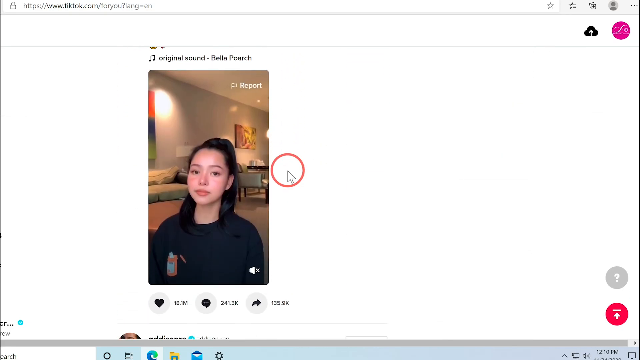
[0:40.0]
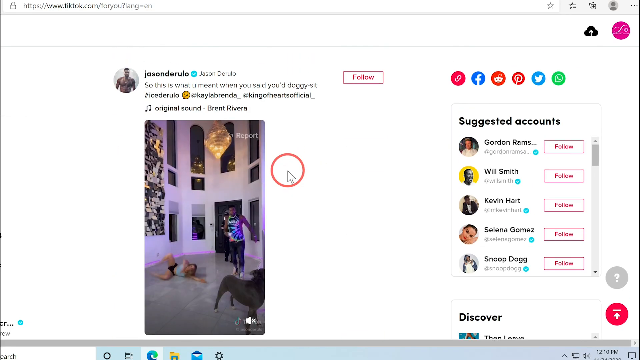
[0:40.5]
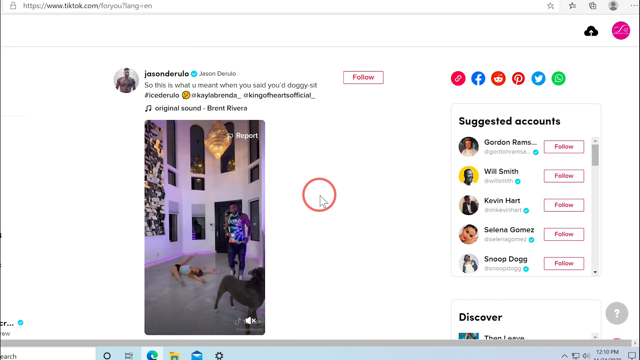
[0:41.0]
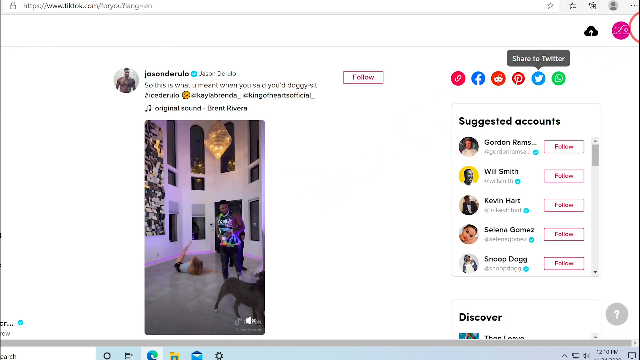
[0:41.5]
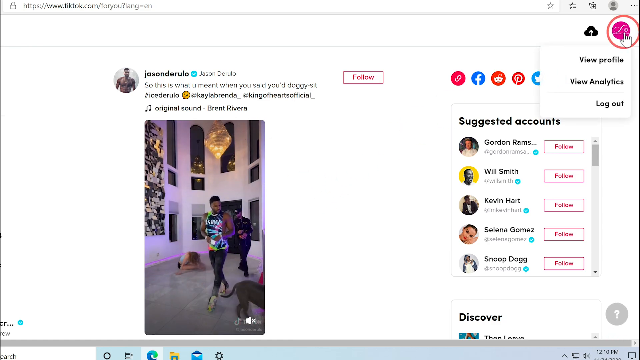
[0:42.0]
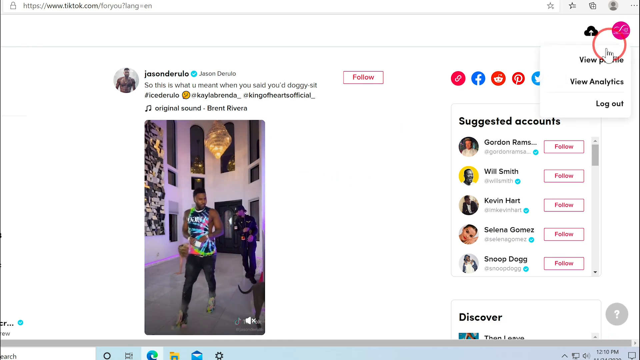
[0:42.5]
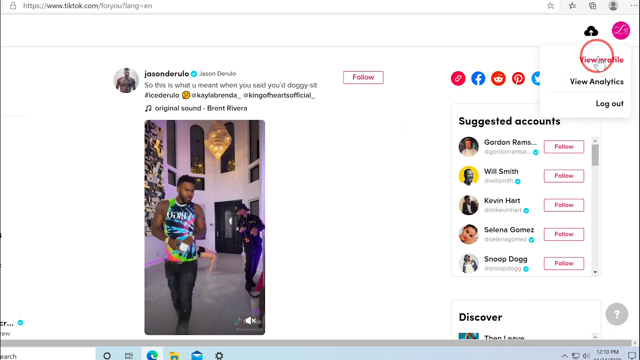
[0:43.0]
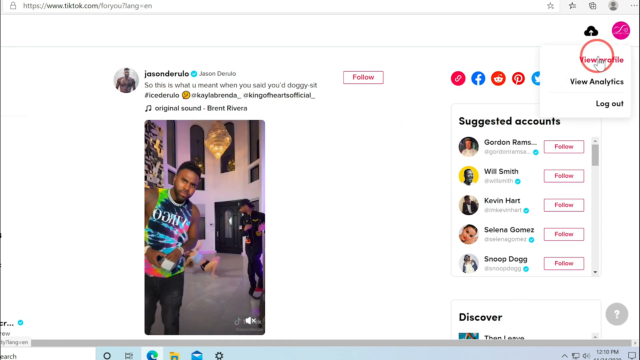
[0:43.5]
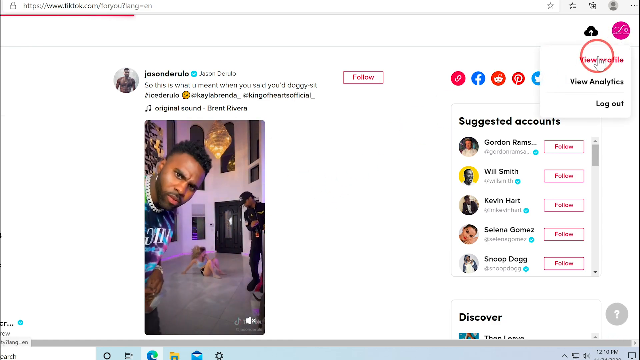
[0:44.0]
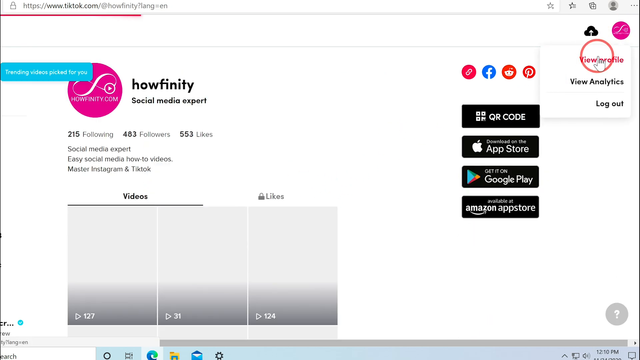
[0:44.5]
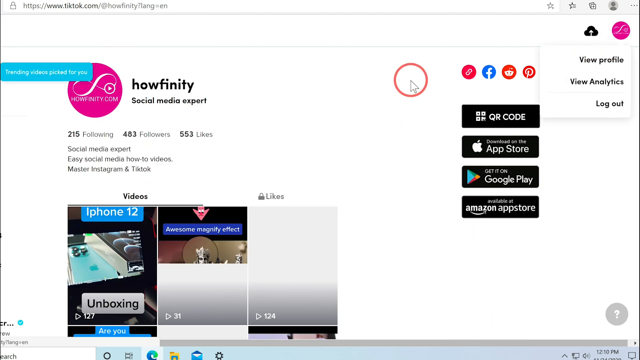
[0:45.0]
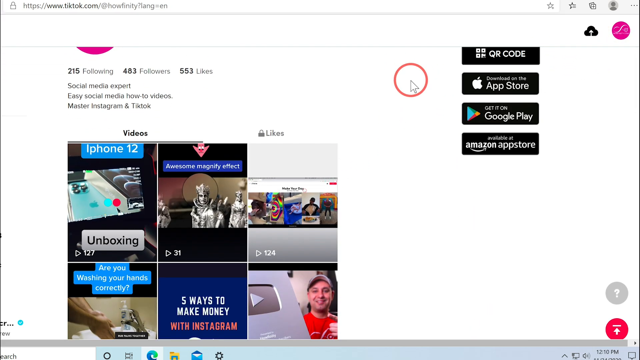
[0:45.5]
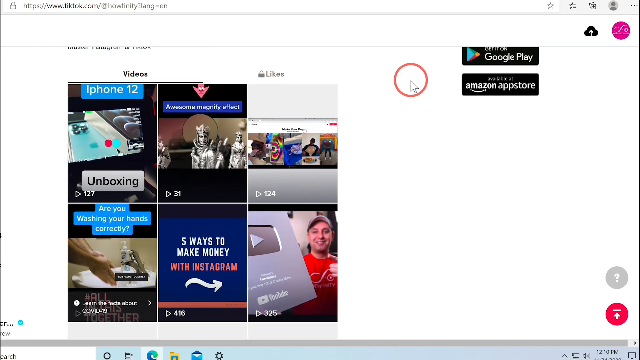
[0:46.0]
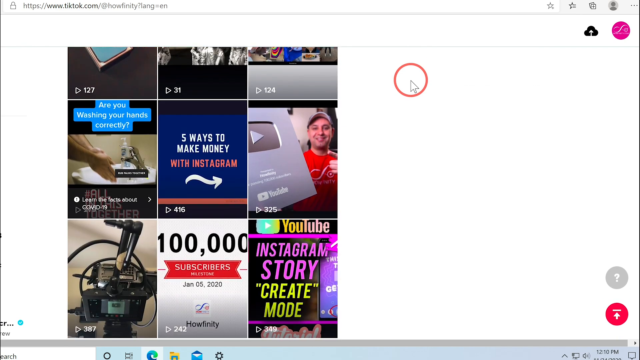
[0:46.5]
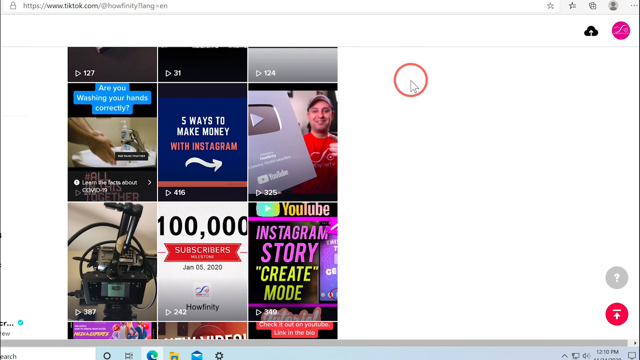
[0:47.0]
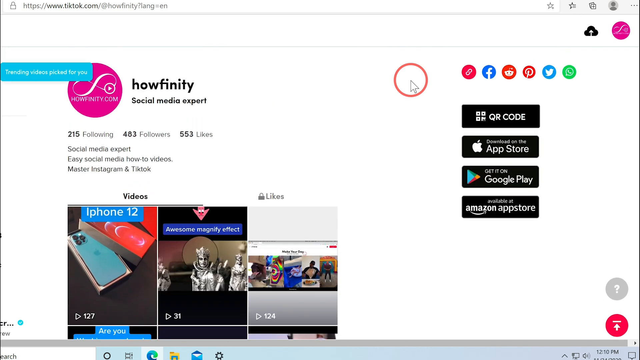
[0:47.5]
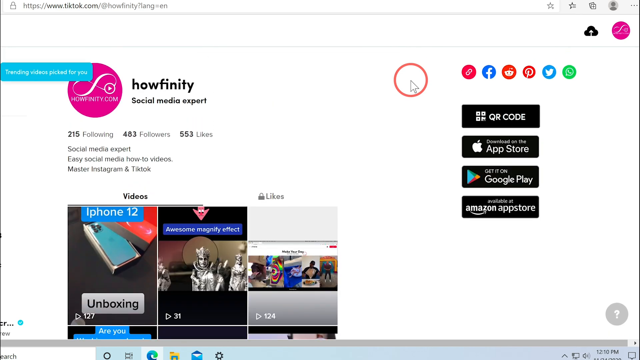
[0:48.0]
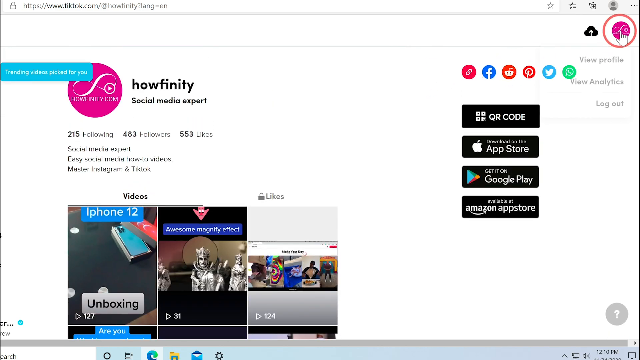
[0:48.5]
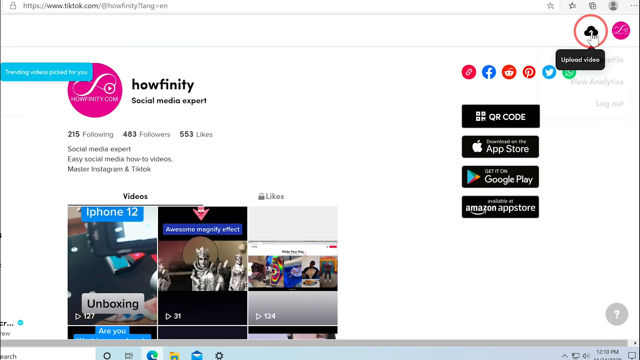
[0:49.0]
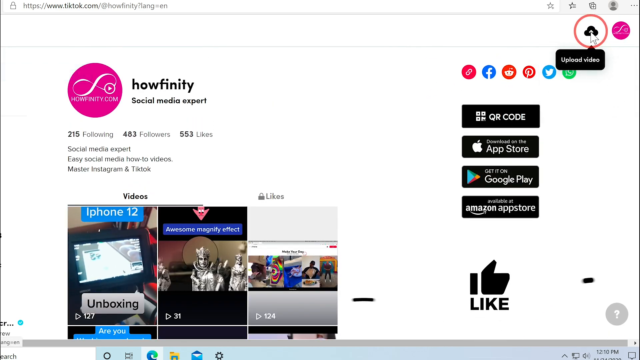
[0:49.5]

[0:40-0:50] A picture of a girl is labelled "Bella Porch". She looks like she is just standing in her living room; she has dark hair pulled back, a medium complexion and a dark shirt. The next video shows two Black guys and a white girl rolling around on the floor. Next, text says "Howlfinity", and the view moves quickly without staying on anything long, showing something like a social media expert. Then Jason Derulo appears walking with another guy, followed by a white lady rolling around on the floor. The view returns to the beginning, with the girl and the mouse icon with a red circle around it.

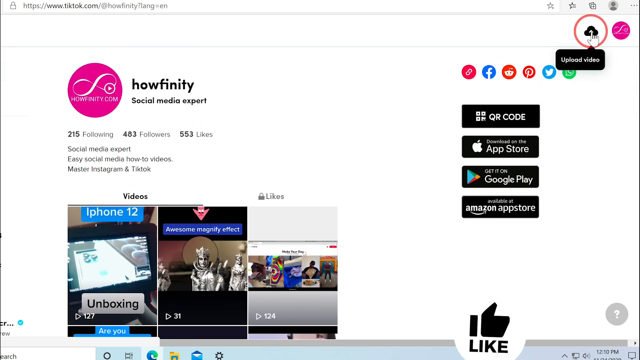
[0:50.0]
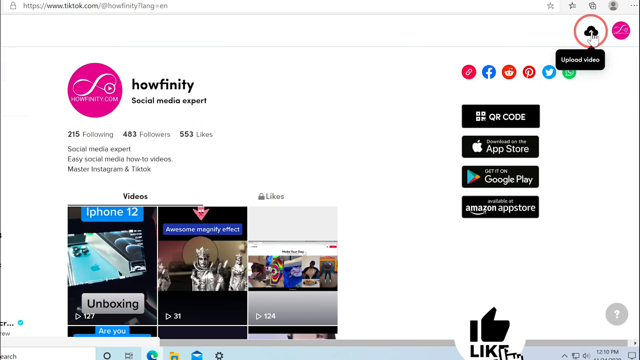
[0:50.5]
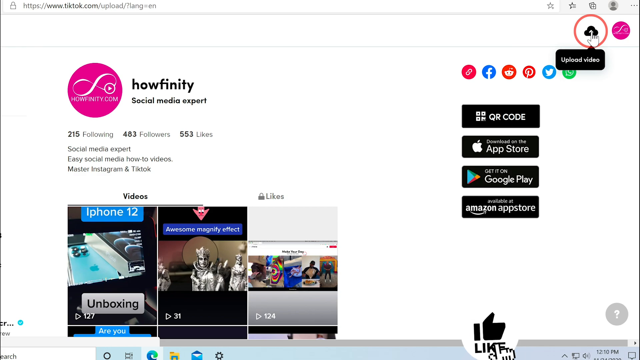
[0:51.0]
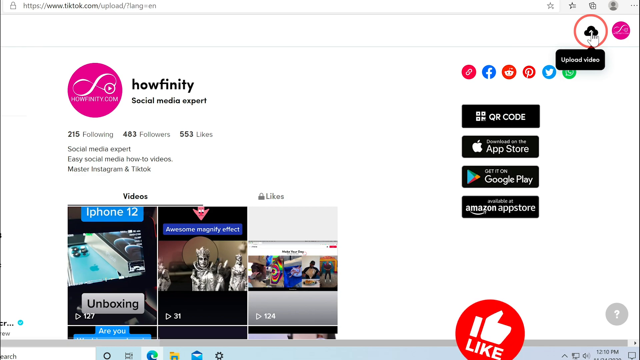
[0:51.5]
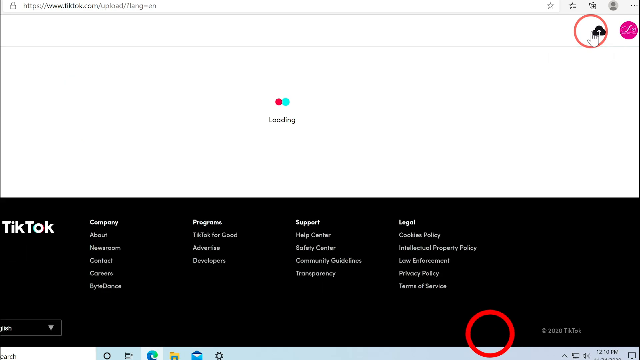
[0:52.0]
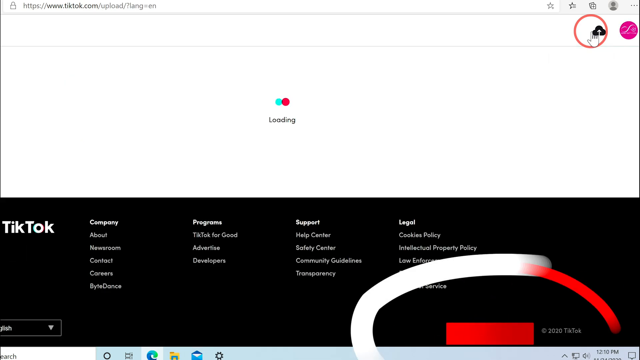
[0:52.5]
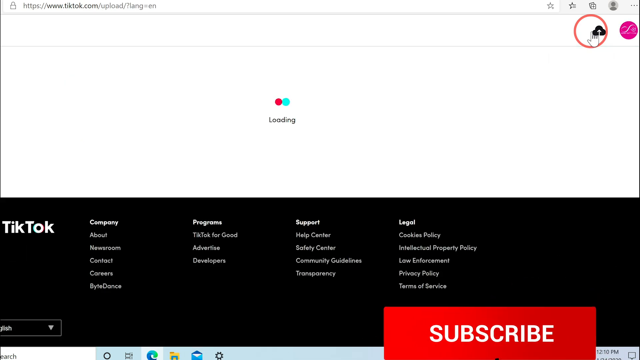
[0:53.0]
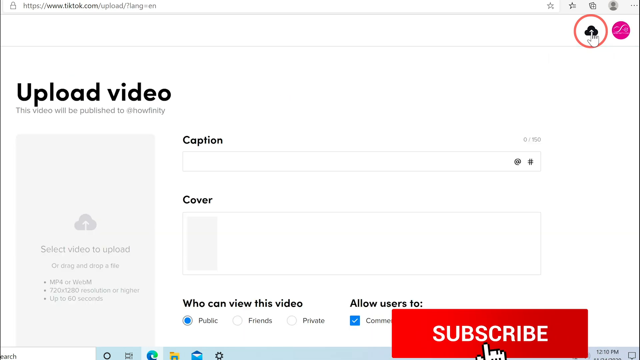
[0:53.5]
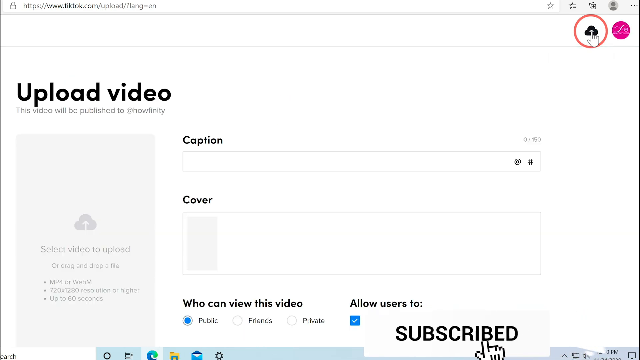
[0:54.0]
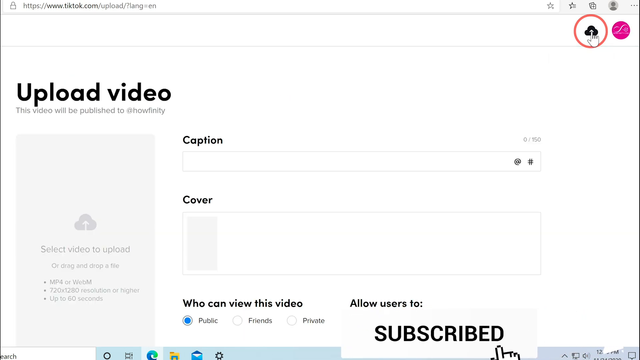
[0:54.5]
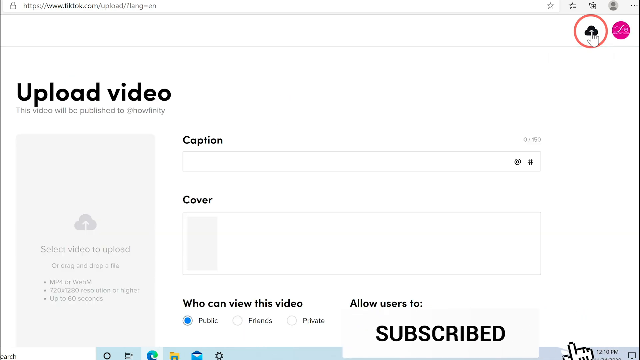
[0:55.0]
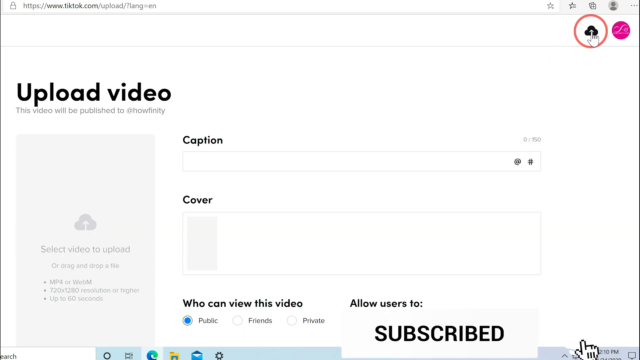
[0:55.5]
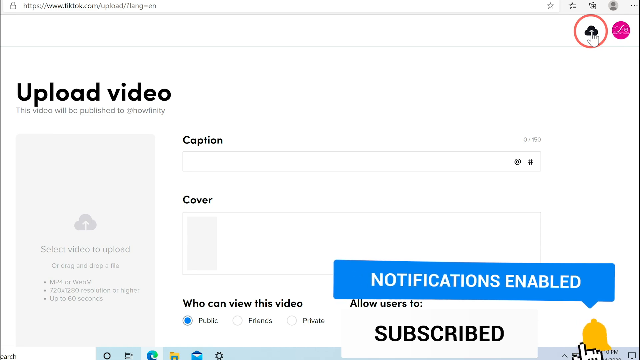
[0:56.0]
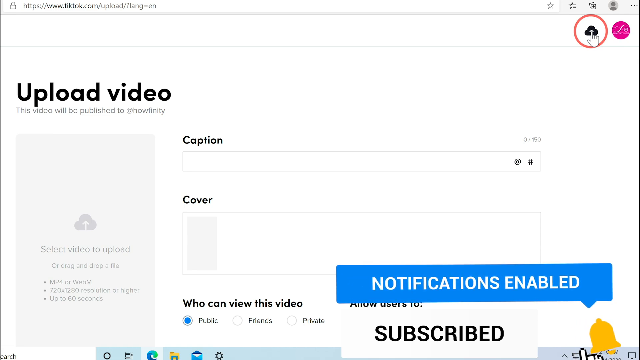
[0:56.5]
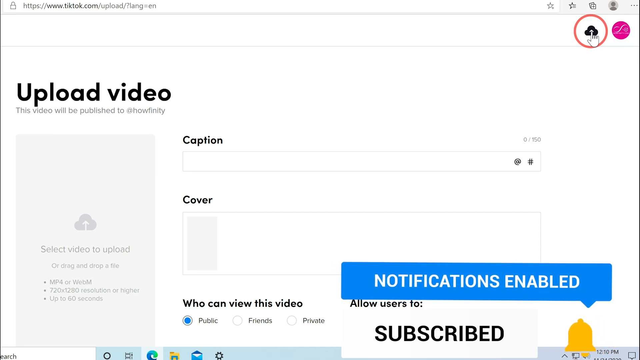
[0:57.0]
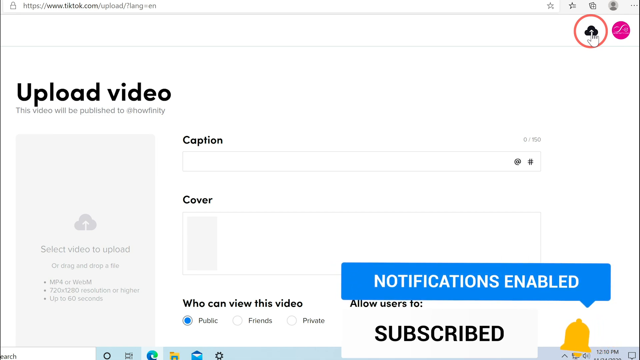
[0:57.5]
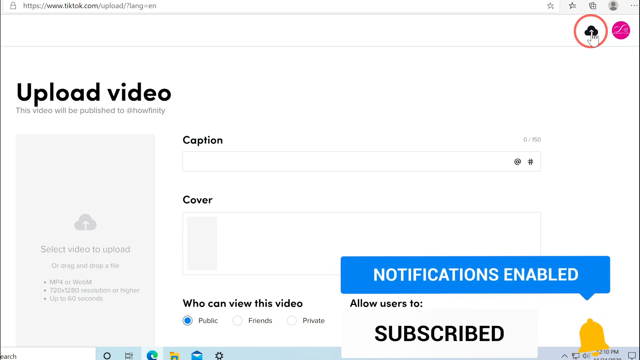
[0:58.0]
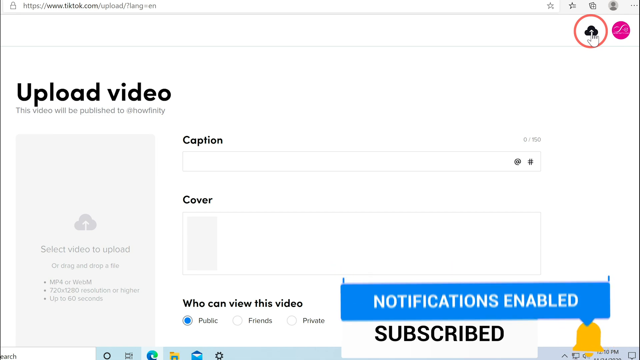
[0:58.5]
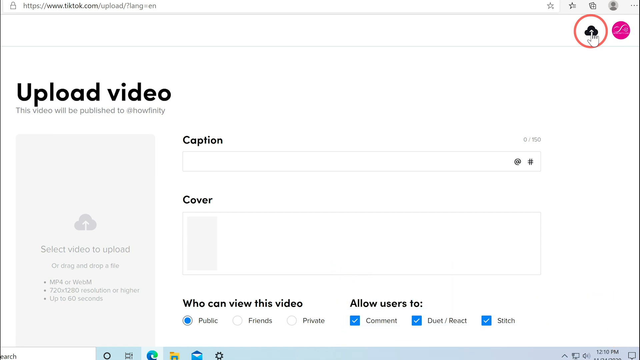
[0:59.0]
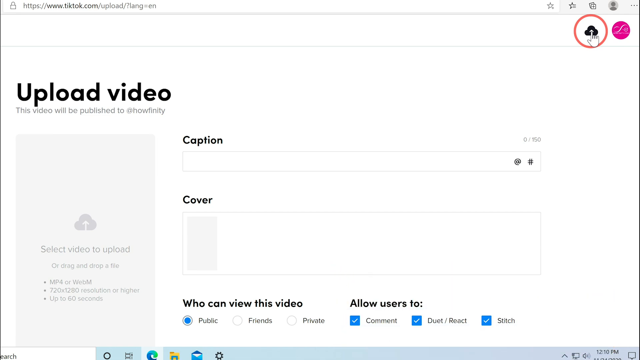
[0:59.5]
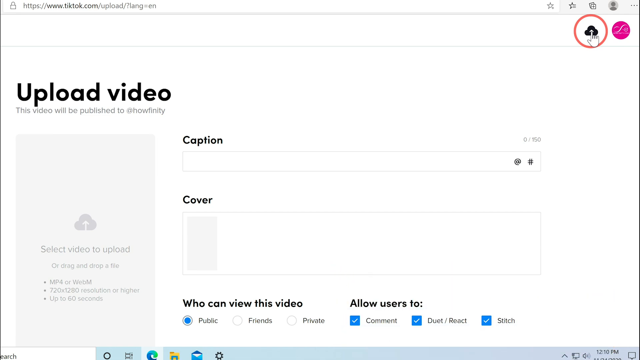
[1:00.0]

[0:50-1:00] The Howlfinity channel is shown quickly. After it gets liked, the view goes to "upload video", then a loading screen, then text says "notifications enabled" and "subscribed" with "upload video". The view returns to the beginning: the Howlfinity social media expert page shows 215 following, 463 followers and 553 likes, with the text "social media expert easy social media how-to videos" and mentions of Instagram and TikTok; the rest of the text is too small to read. Google Play and Apple Store appear. He likes it, it uploads, he subscribes, and the notification appears as a white screen before the view returns to his screen. He appears to be figuring out how to upload videos.